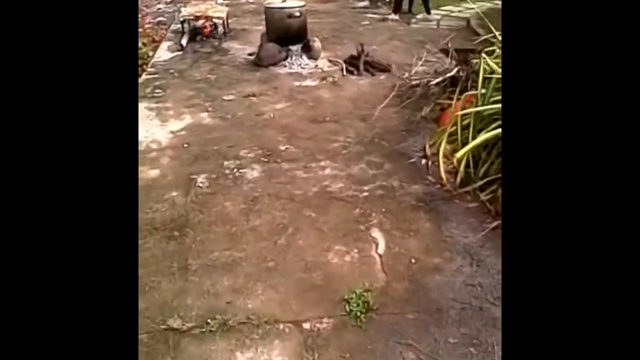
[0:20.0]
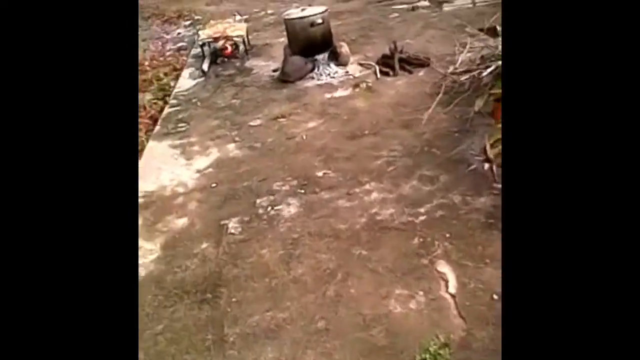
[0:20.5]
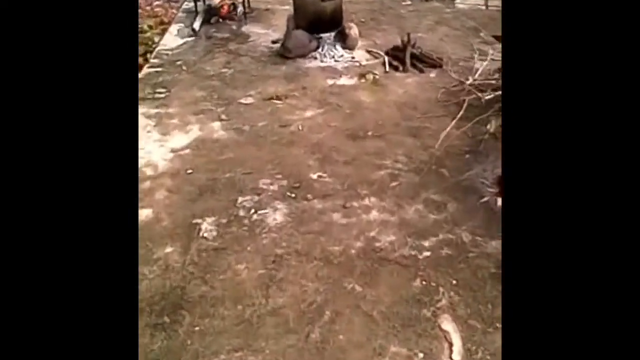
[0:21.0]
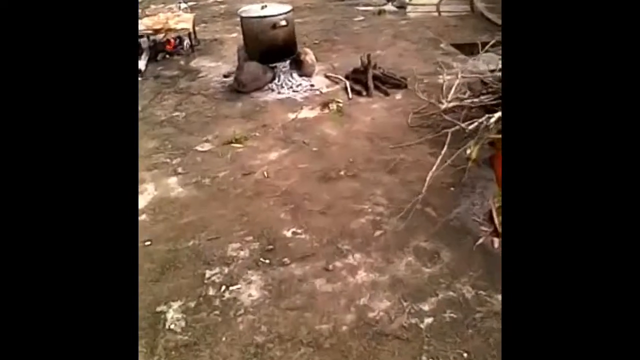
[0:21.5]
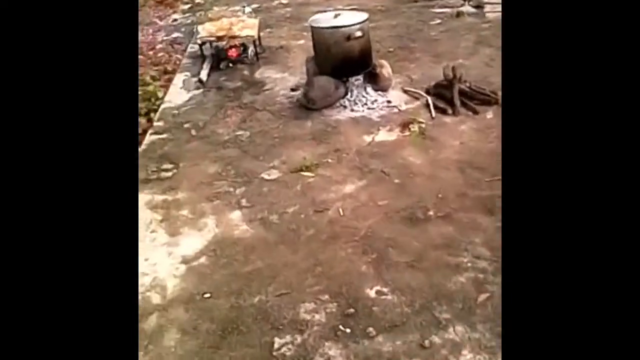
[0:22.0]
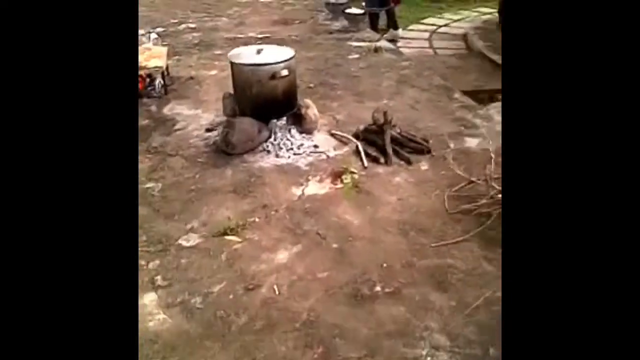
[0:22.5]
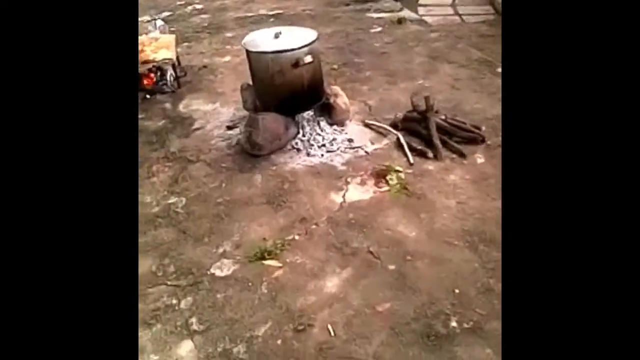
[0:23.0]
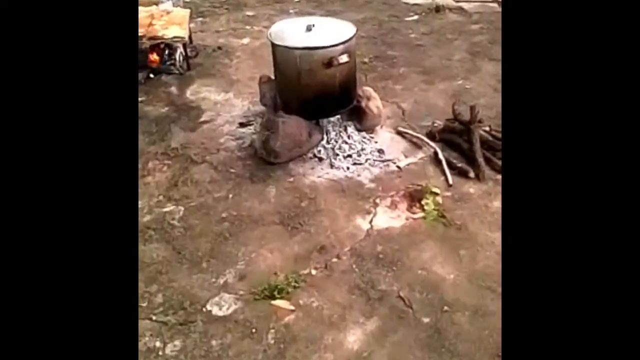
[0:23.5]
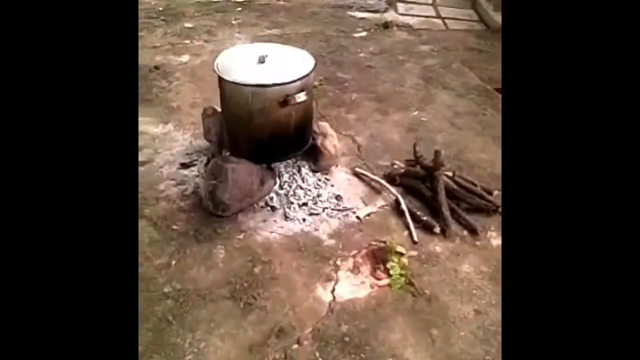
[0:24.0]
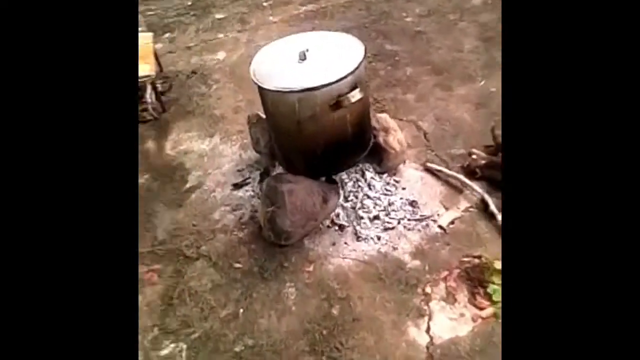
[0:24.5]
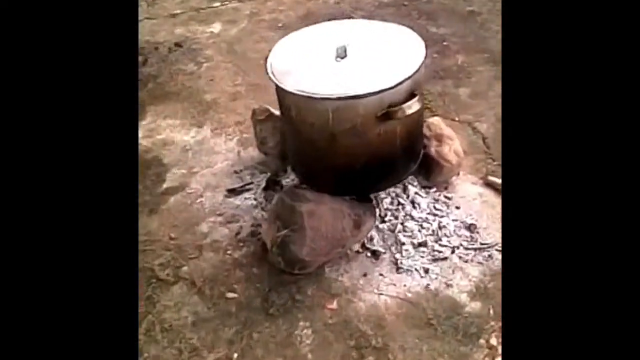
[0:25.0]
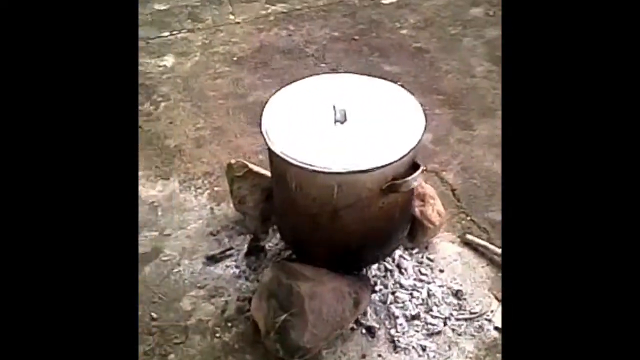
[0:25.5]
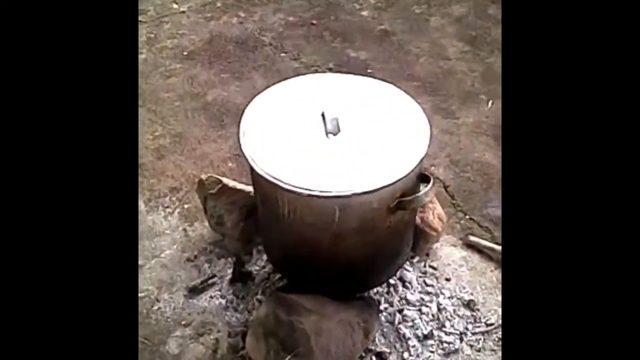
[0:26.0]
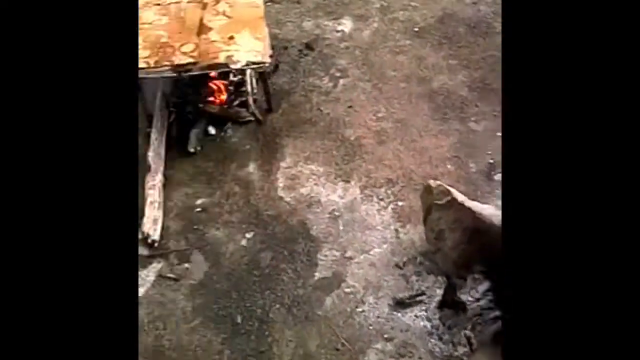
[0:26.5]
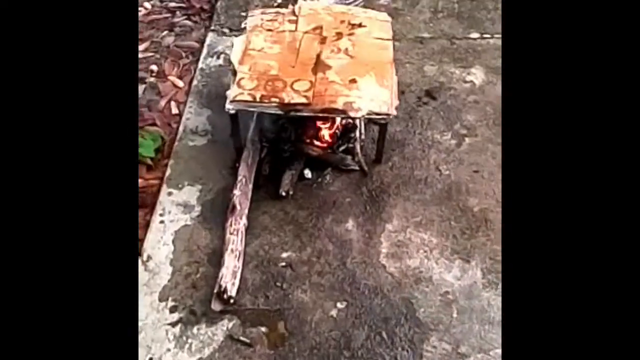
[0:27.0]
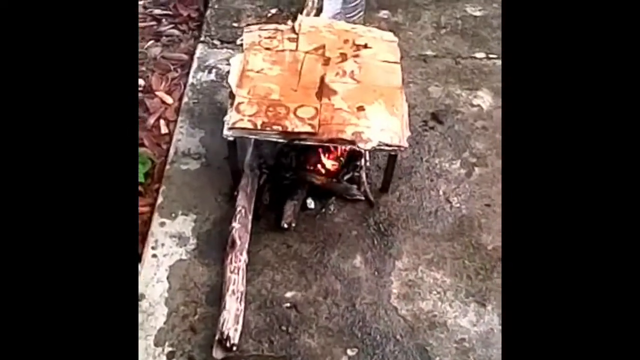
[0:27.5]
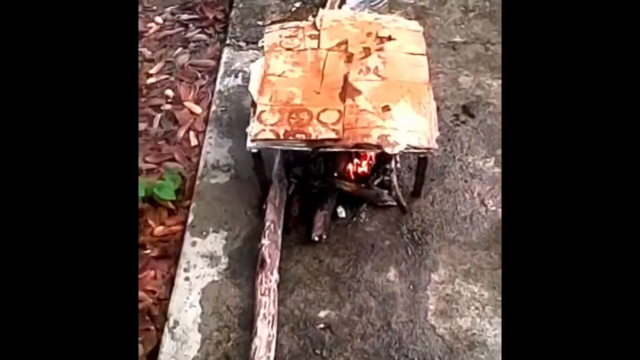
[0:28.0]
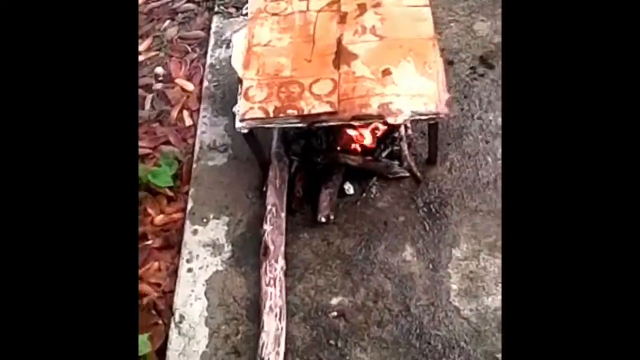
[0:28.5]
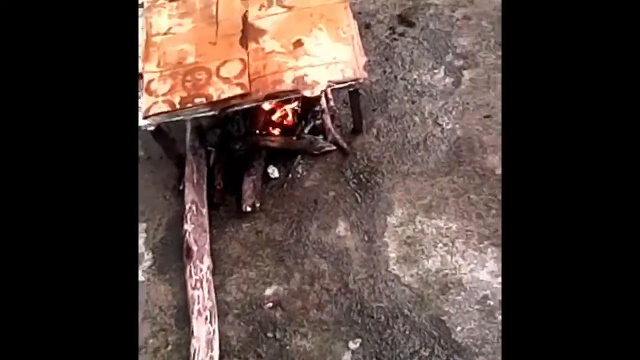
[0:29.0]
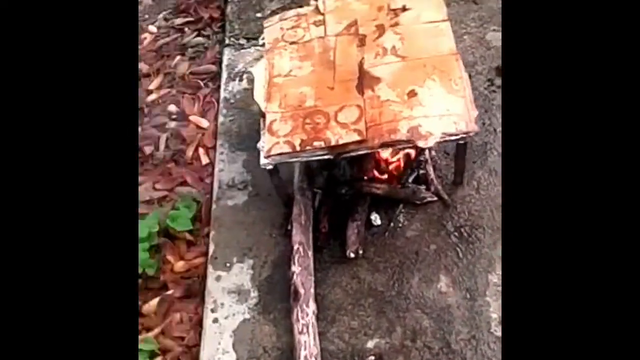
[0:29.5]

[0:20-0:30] There appears to be some kind of concrete-looking platform. The camera shakes, almost like a first-person view, which makes the image distorted and blurry. There is what looks like maybe a pile of rocks with a large pot, probably a hundred-quart one, with a lid on top. A few bigger rocks seem to be positioned so it doesn't tip over, two at the bottom and one on the far left. A pile of sticks is to the right. The camera zooms in on the lid, going from the top and quickly over to the left. There appears to be some kind of square cage that is open on the sides, with metal along the top edges of this table. There is also what looks like cardboard that seems to have been singed on top. A large log on the left is not part of the fire, while smaller pieces of wood appear to have been cut up for the brush fire.